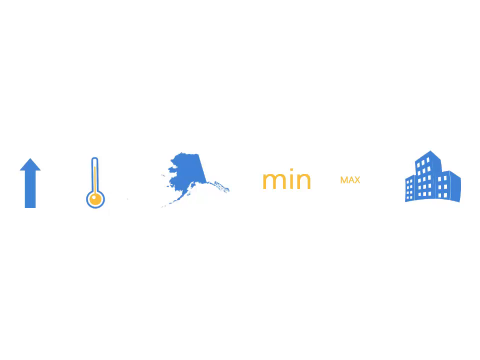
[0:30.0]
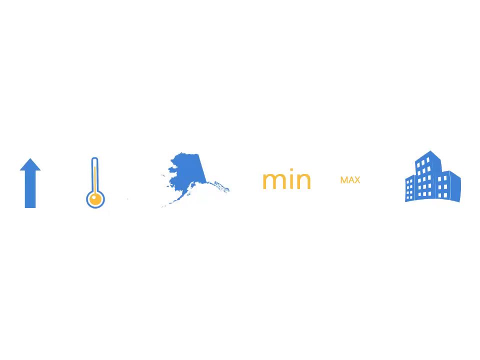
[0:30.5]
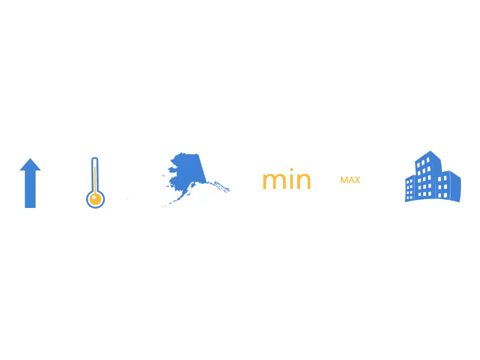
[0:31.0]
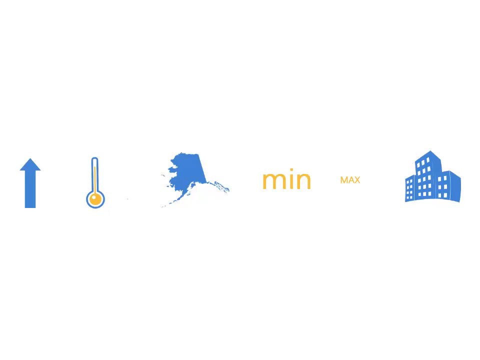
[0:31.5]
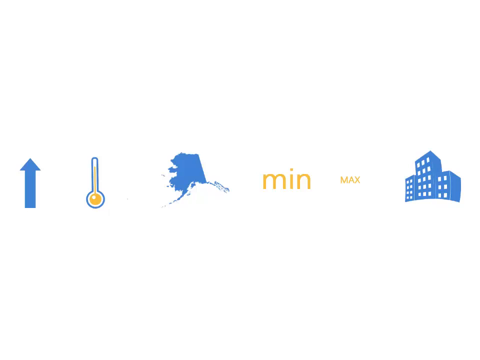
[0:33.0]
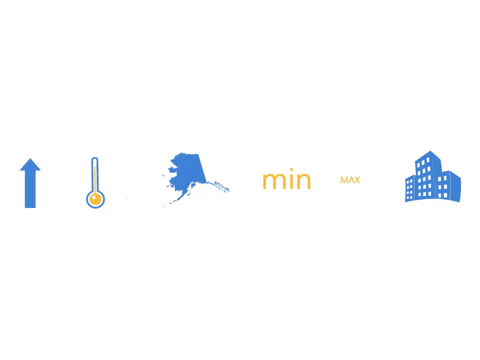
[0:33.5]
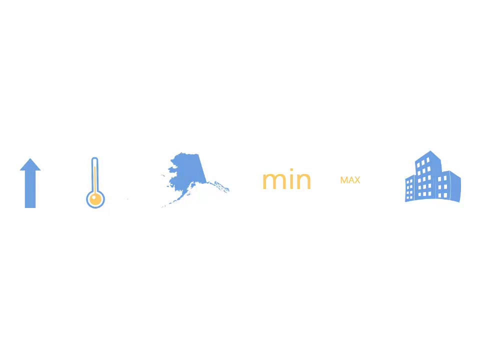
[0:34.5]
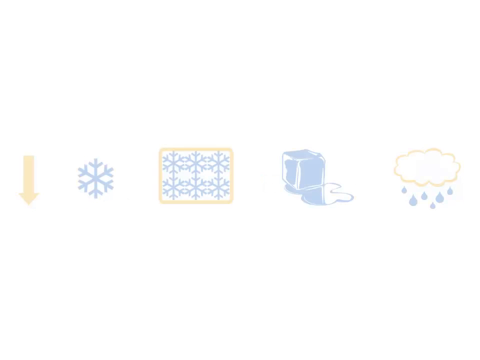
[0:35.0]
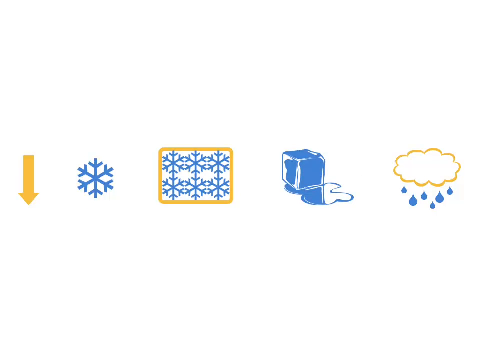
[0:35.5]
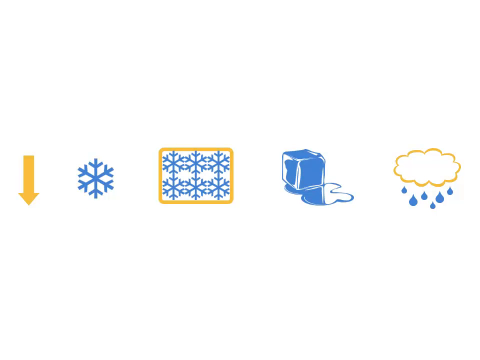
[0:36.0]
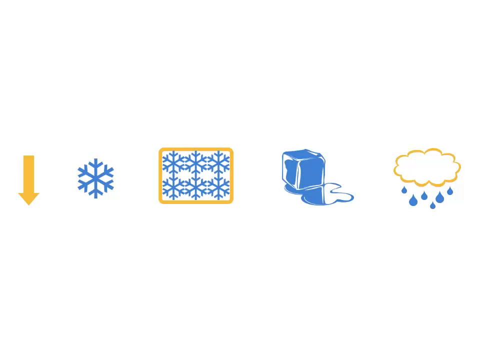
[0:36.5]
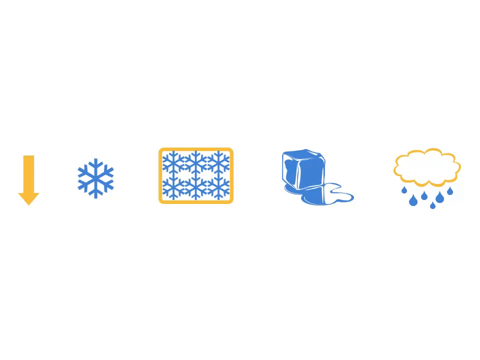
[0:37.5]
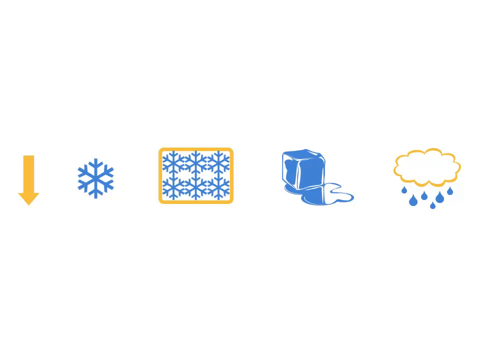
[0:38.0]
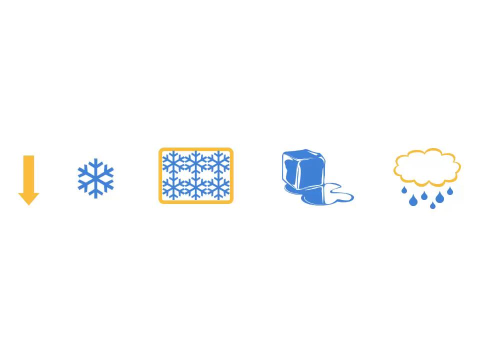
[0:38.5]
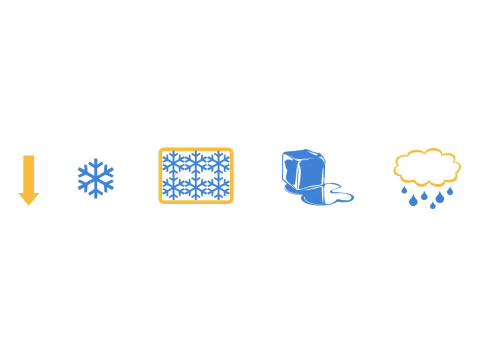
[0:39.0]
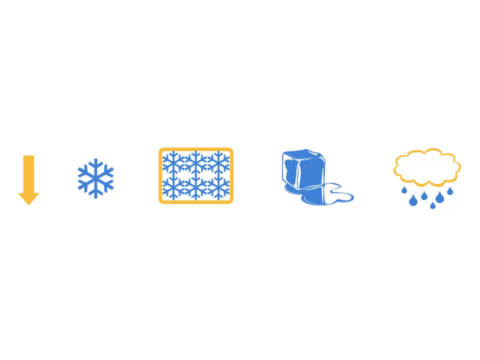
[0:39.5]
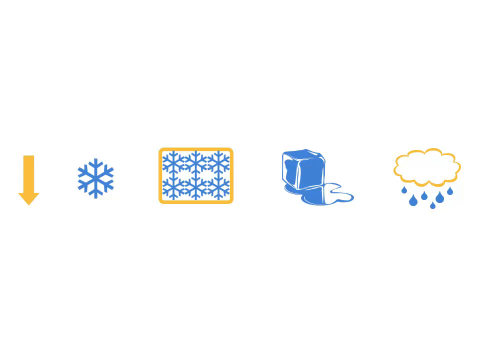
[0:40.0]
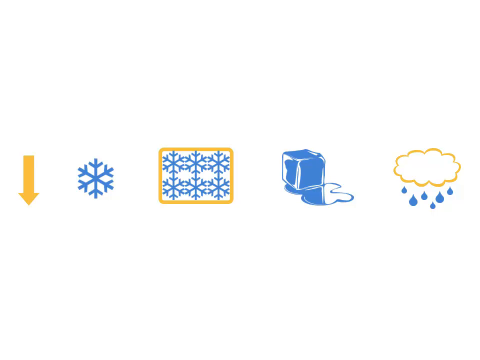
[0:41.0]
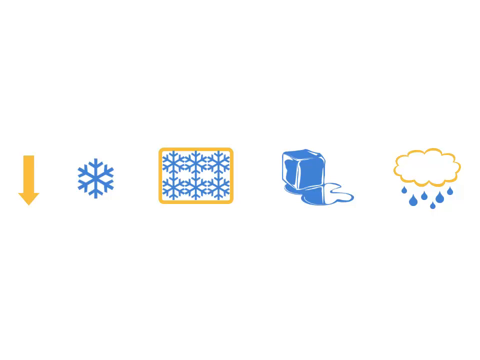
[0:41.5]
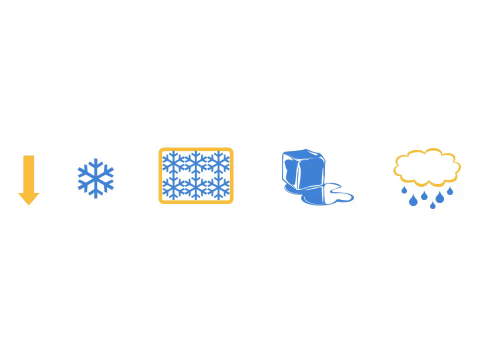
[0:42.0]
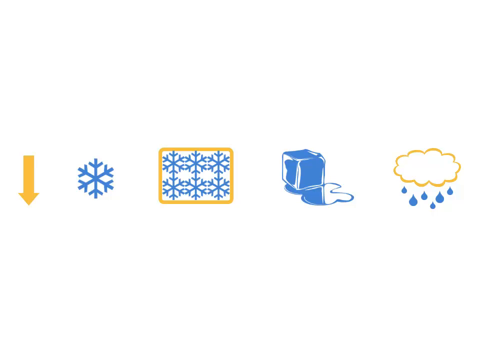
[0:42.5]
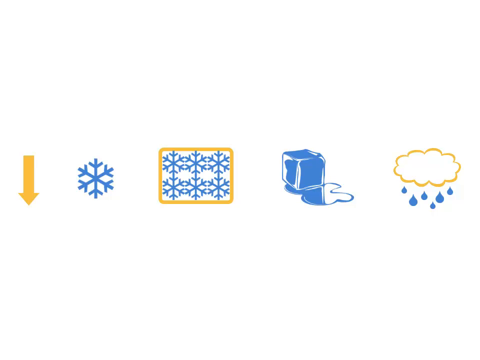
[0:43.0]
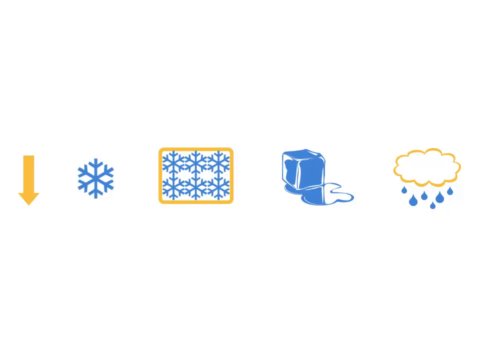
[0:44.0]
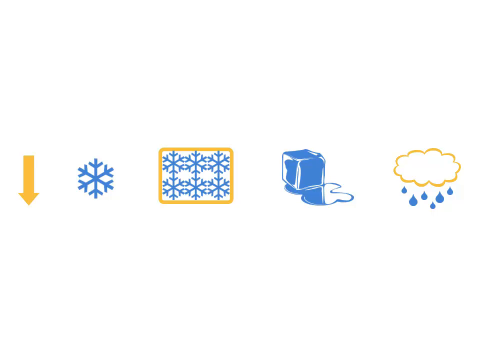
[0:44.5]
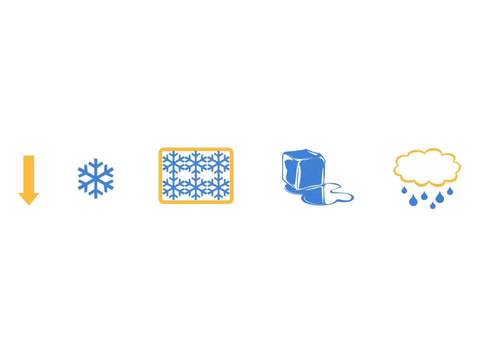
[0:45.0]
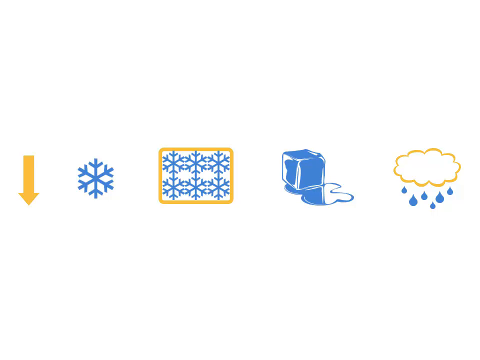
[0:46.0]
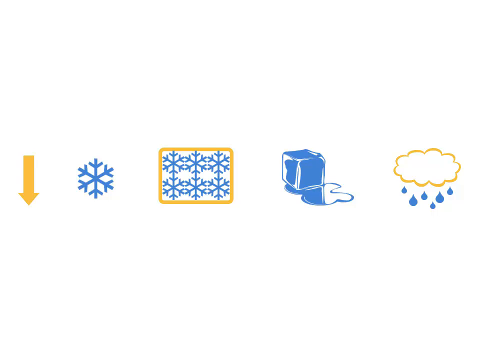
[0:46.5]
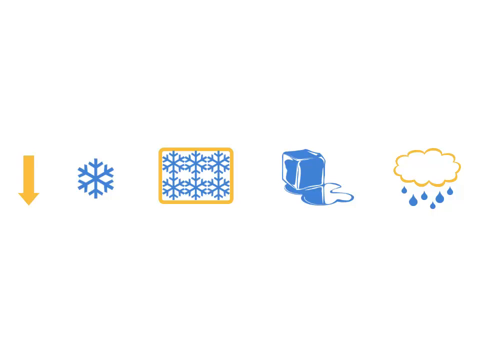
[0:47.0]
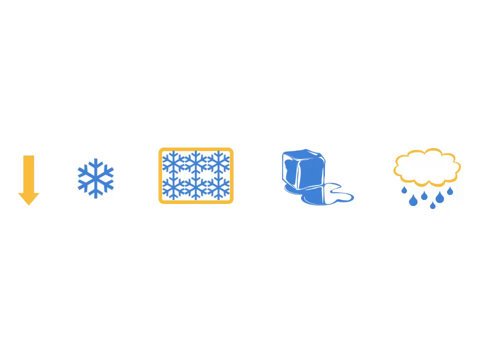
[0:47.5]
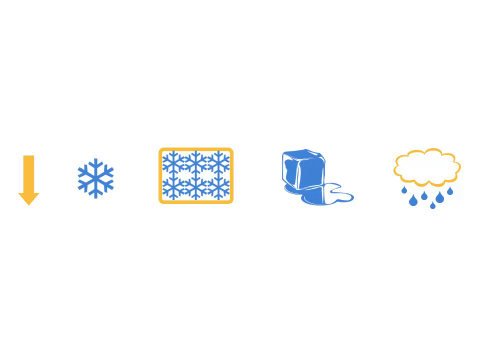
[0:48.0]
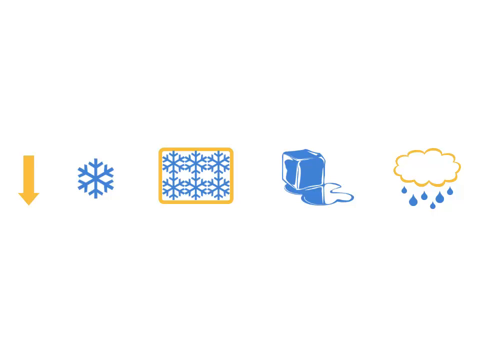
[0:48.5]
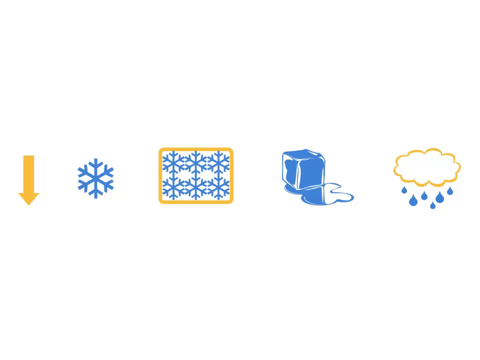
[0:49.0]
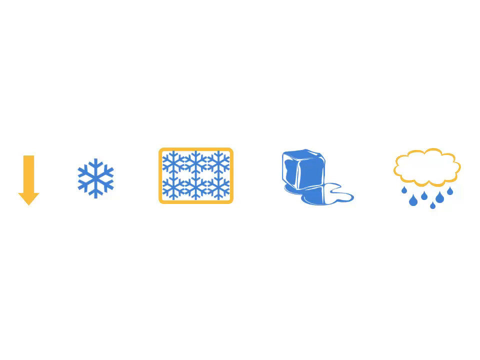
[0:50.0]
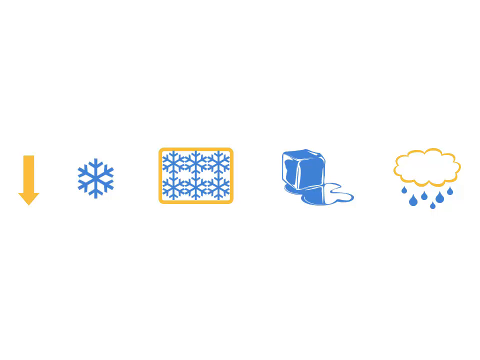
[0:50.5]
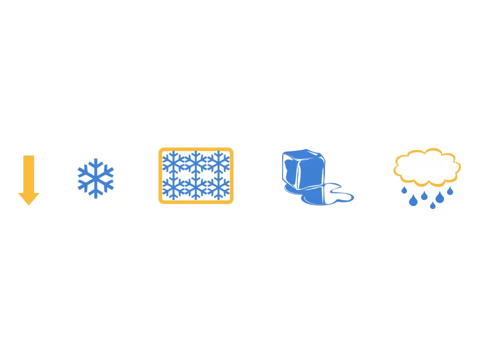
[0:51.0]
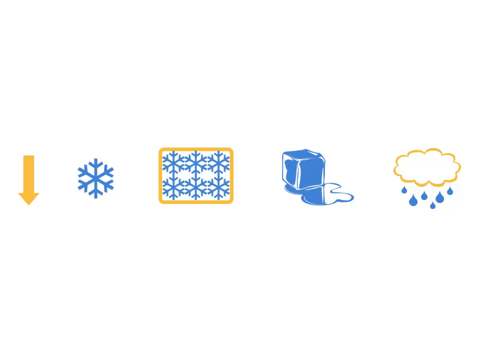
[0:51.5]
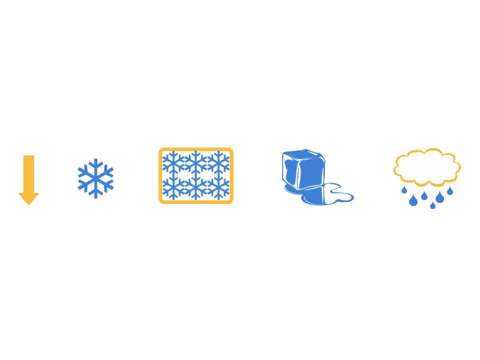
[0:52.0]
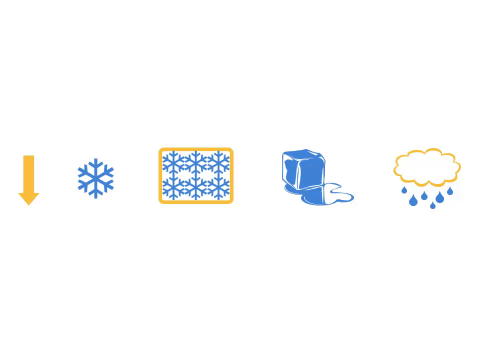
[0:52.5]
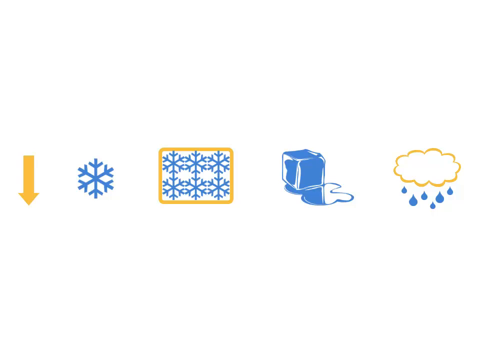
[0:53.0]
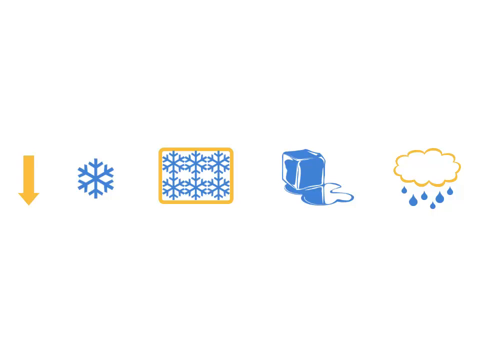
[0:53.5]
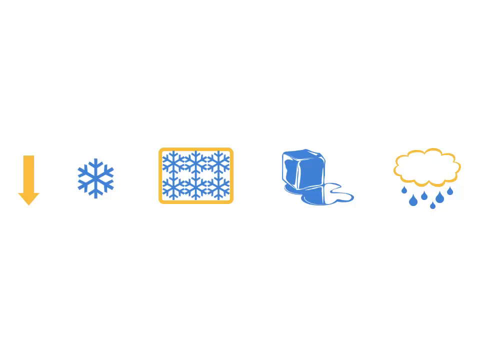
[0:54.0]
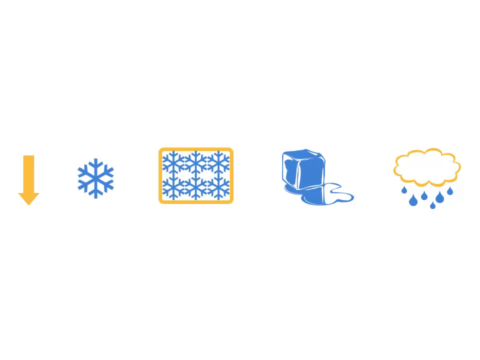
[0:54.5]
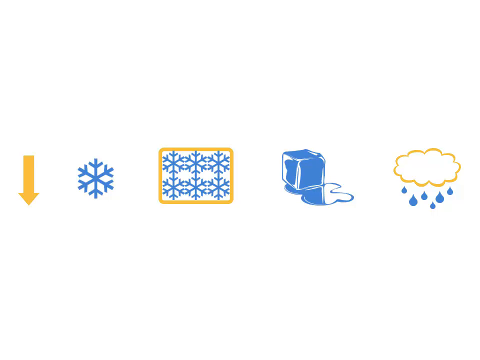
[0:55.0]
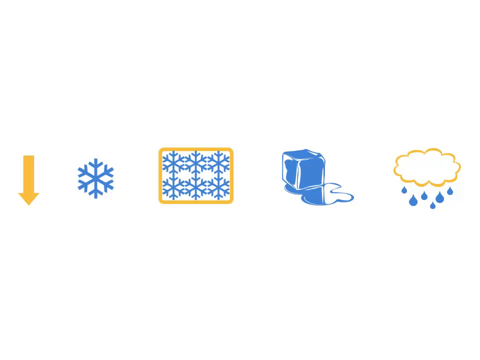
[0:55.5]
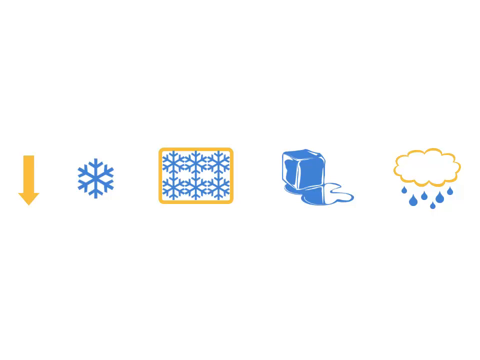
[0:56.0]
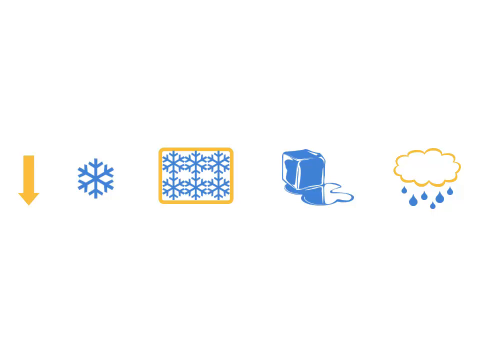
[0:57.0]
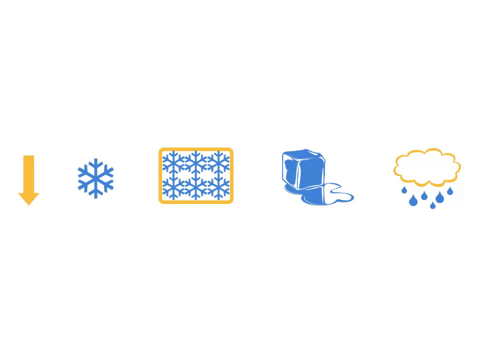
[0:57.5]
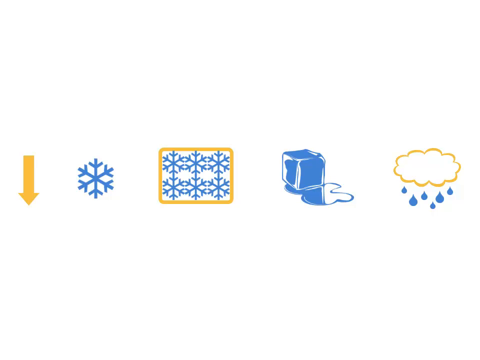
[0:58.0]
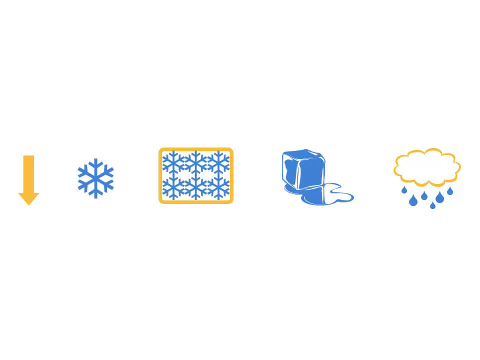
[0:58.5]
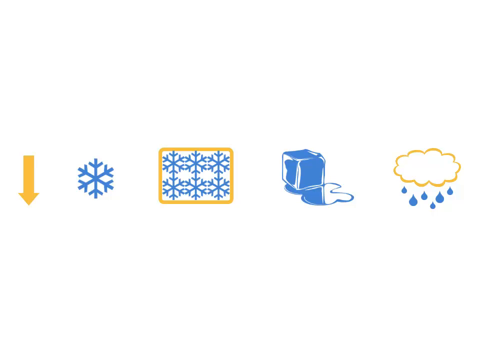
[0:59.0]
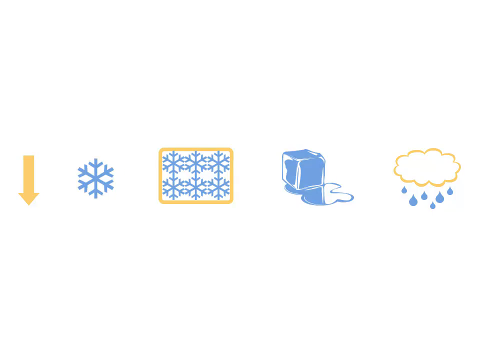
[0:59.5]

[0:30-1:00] The white background page continues with a row of icons in the centre: from the centre left, an upward-pointing blue arrow, a barometer or thermometer with a blue outline, a silhouette of Alaska in blue, "Min" in orange, "Max" in orange, and at the far right three tall buildings with white windows. The image then changes to another white background page with a group of icons in the centre. From left to right there is a downward-pointing orange arrow, a blue snowflake symbol, a group of six snowflake symbols inside a rectangular orange border, a melting ice cube, and furthest right an orange cloud with blue raindrops coming from it. The page holds for some seconds.